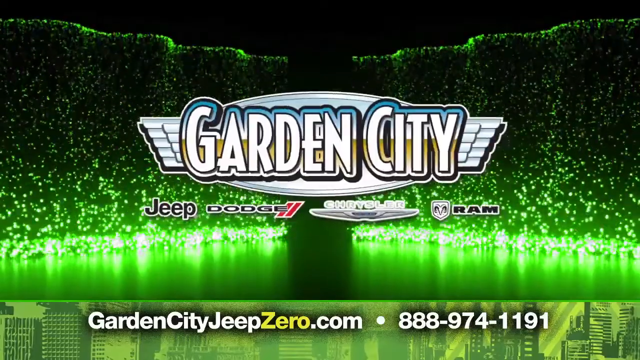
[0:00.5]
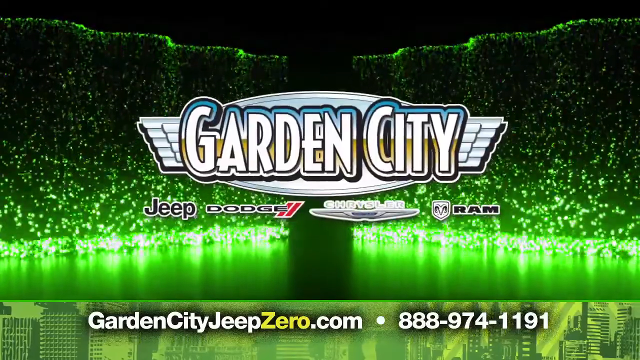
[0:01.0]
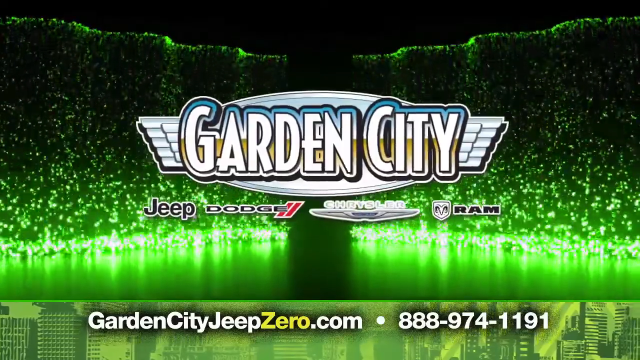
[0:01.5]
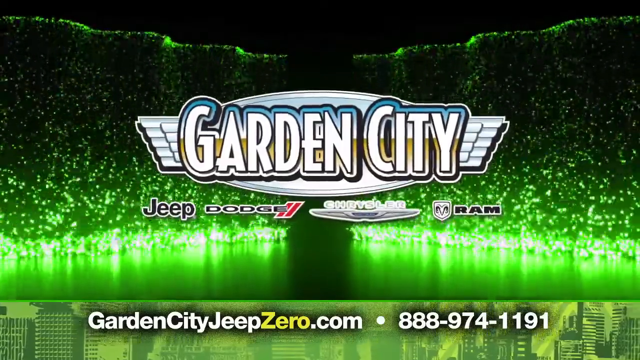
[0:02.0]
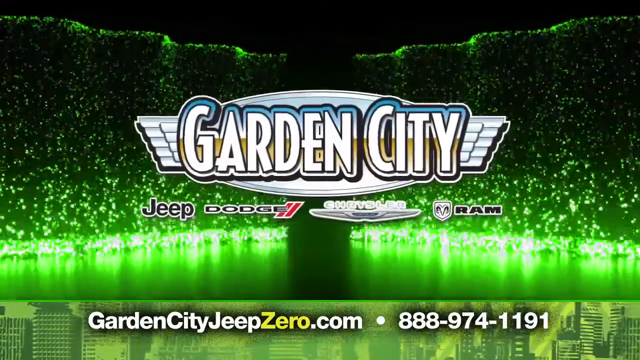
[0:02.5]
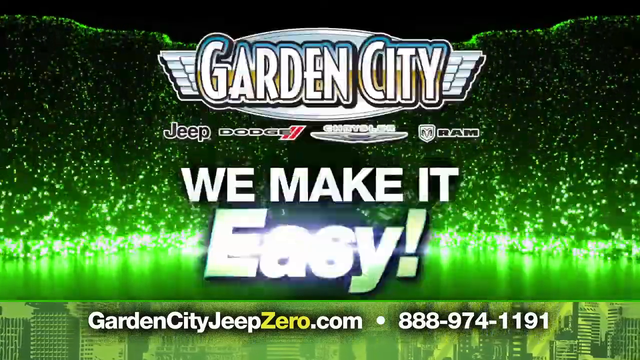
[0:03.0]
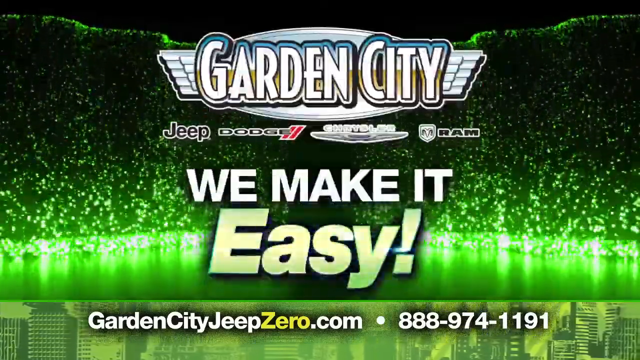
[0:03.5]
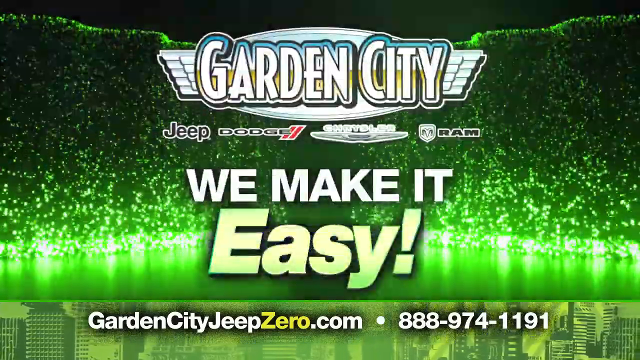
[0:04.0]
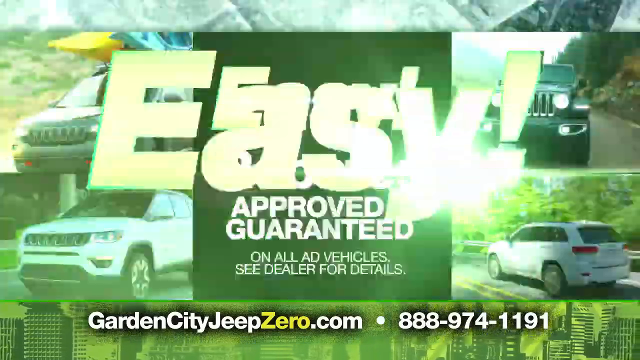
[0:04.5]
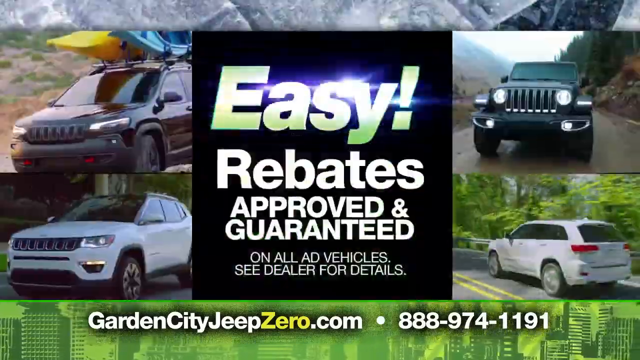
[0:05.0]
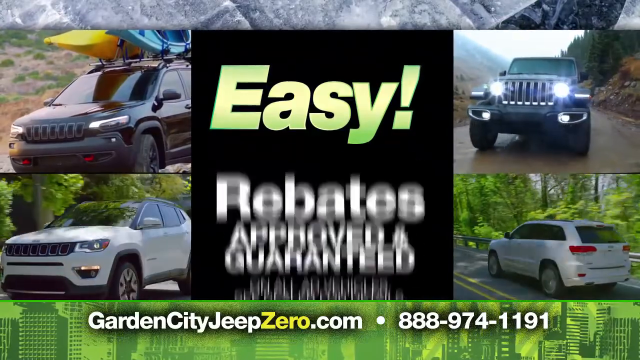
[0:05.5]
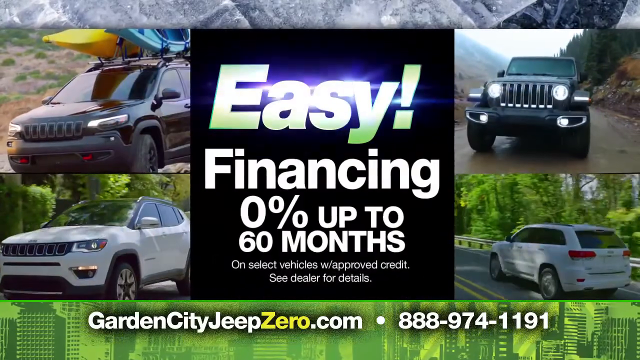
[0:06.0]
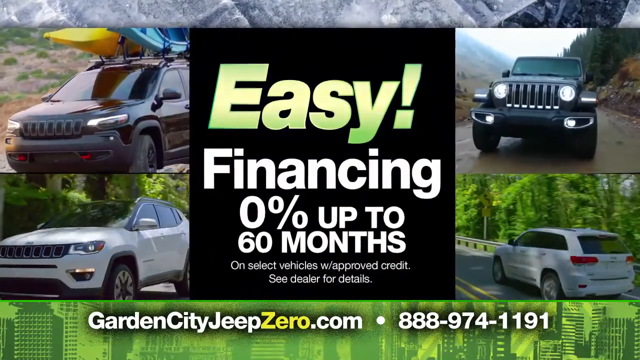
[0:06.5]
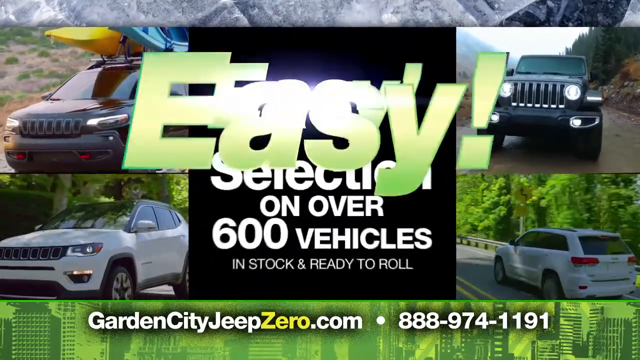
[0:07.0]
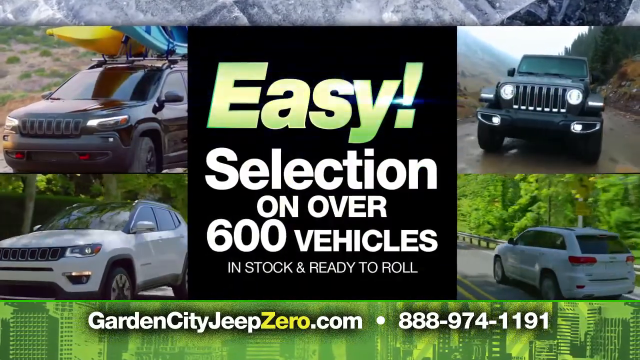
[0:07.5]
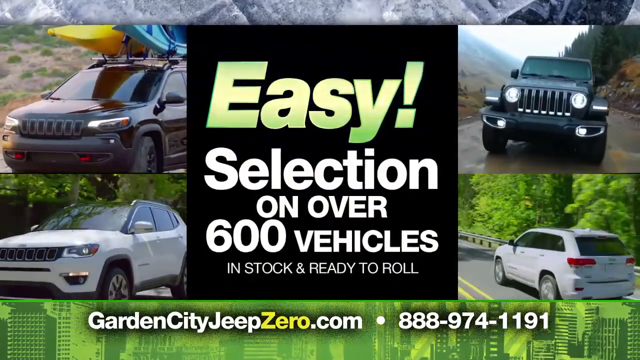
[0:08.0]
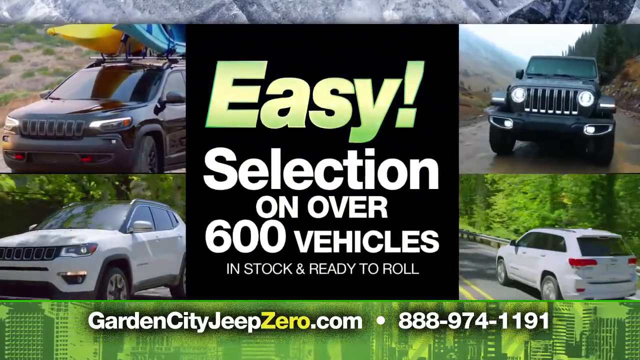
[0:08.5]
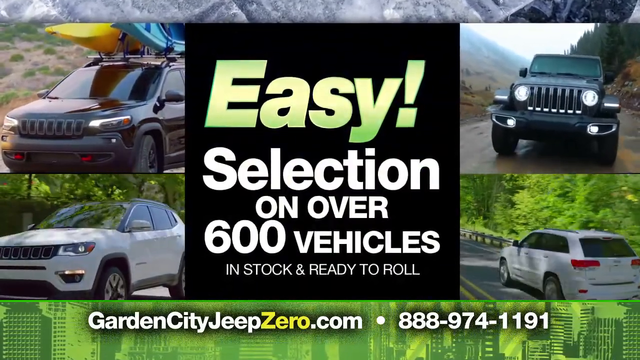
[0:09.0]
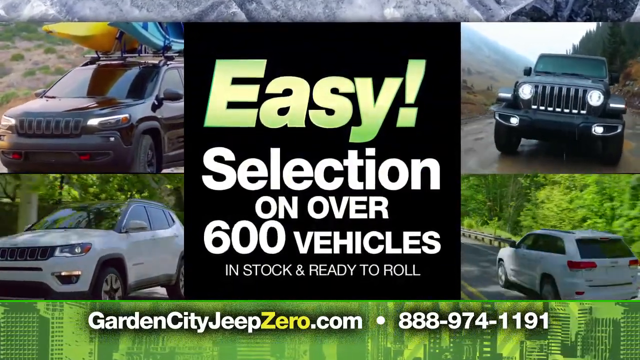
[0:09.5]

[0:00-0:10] On-screen text reads "Garden City," and the ad is sponsored by Jeep and Dodge and a few other car dealers. Text reads "easy financing, 0% up to 60 months." Four cars, which look like different Jeep models, drive down the road in four separate videos. Text mentions the sale ending and gives a date. The website GardenCityJeep0.com appears, and a phone number is shown at the bottom. Text says many of the models are in stock and ready. Behind the Garden City sign is a green light with something like water coming down, creating a bright effect.